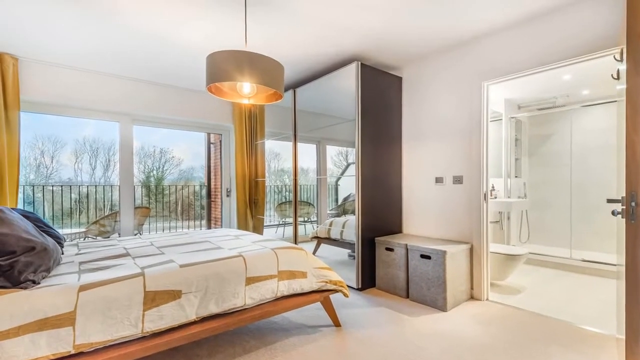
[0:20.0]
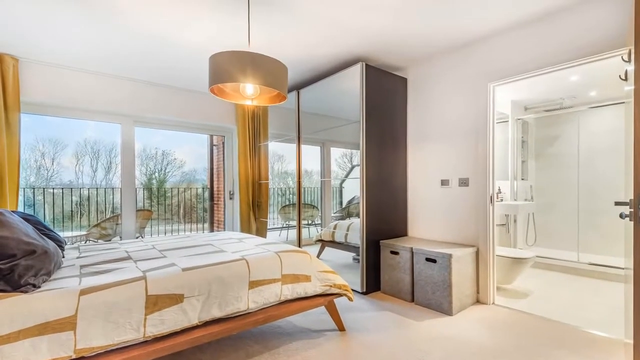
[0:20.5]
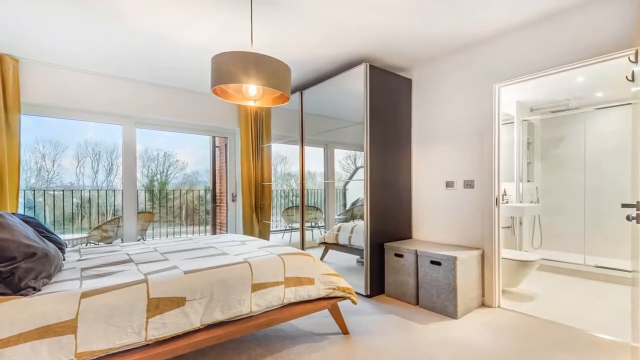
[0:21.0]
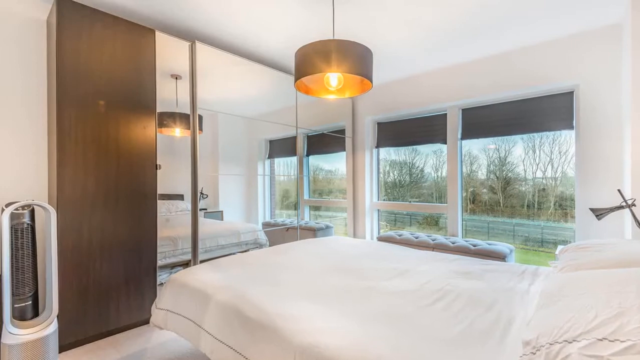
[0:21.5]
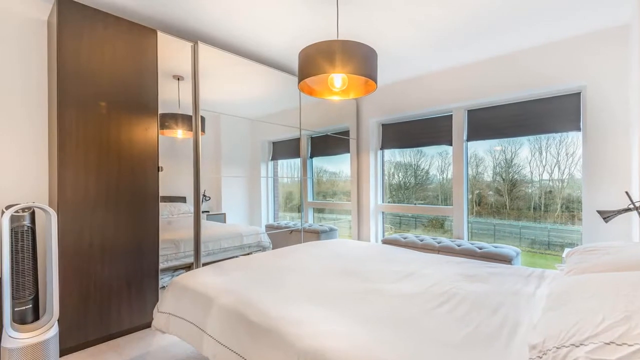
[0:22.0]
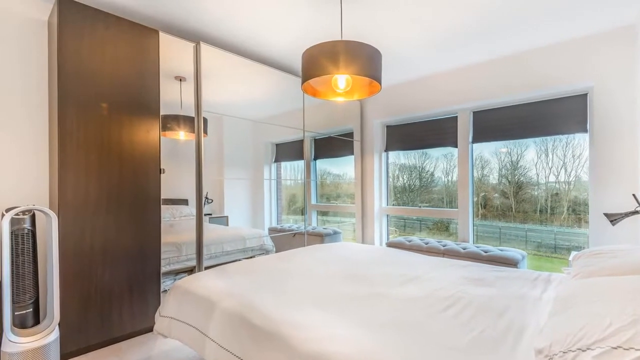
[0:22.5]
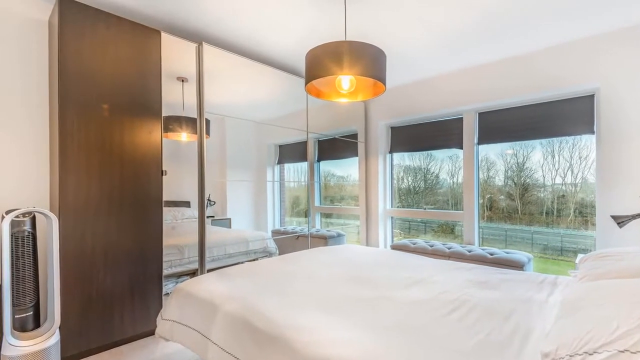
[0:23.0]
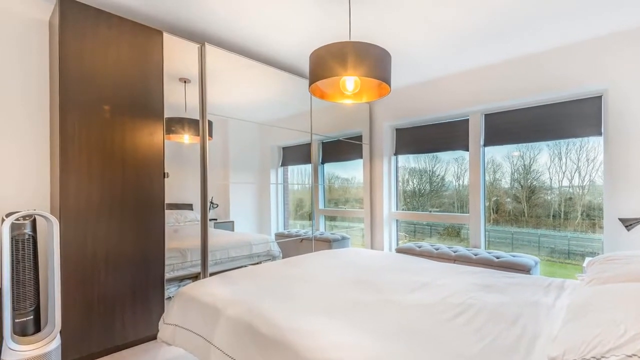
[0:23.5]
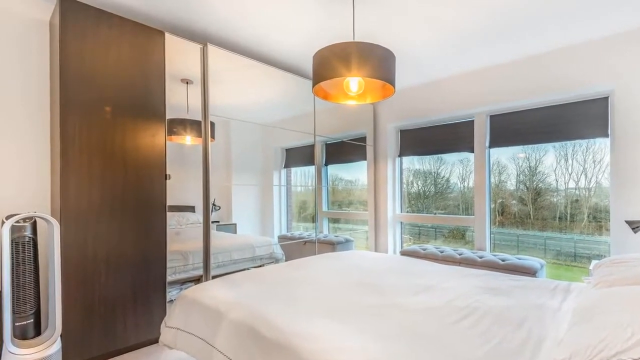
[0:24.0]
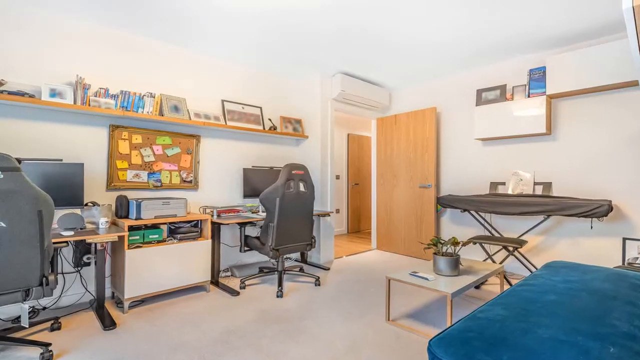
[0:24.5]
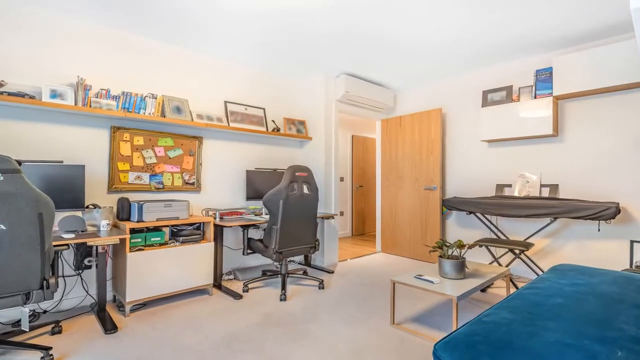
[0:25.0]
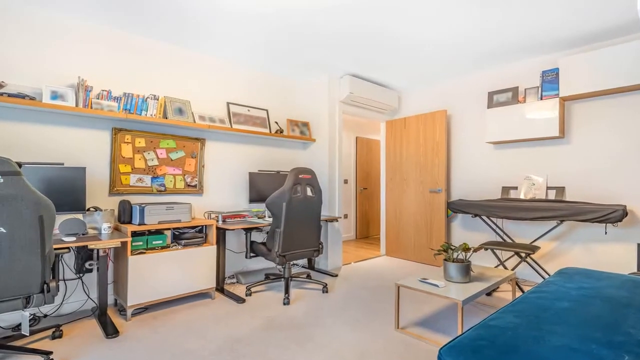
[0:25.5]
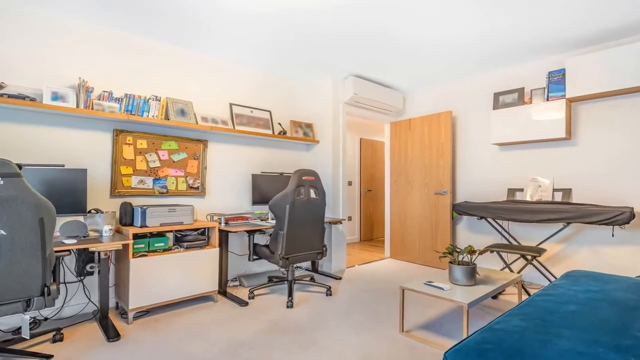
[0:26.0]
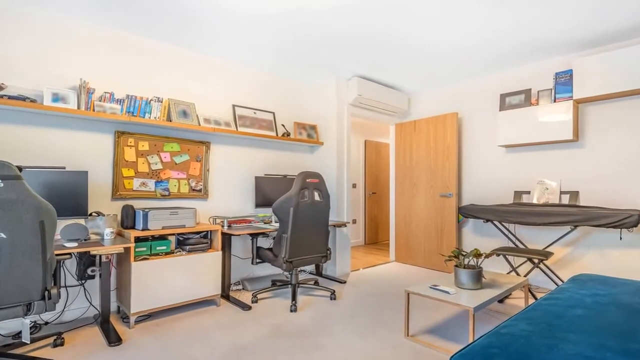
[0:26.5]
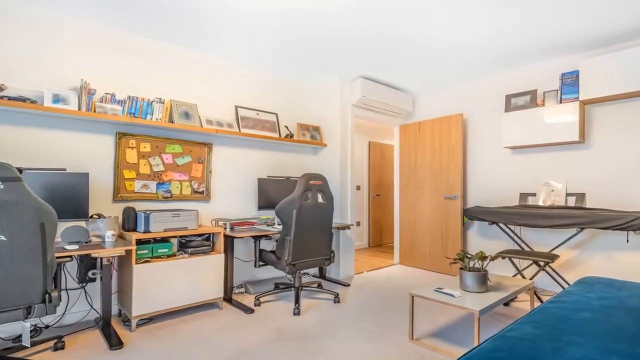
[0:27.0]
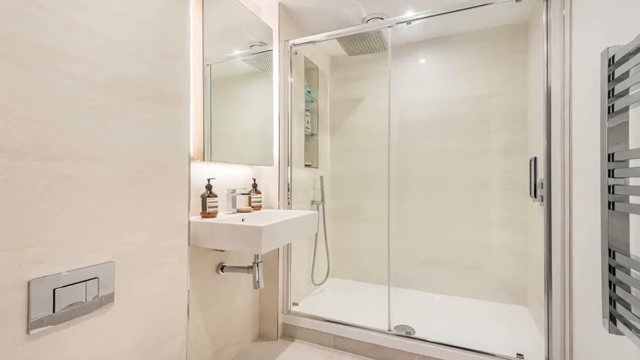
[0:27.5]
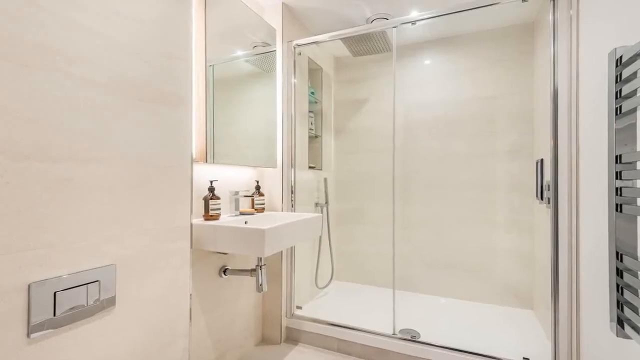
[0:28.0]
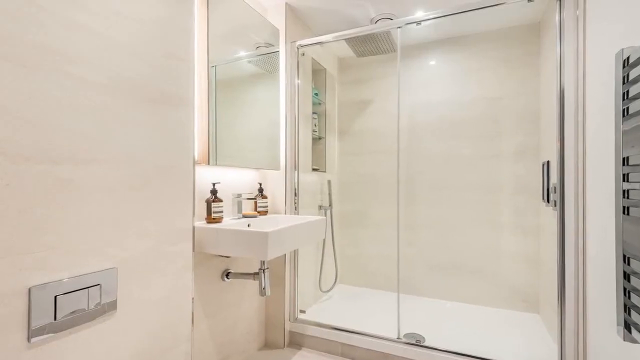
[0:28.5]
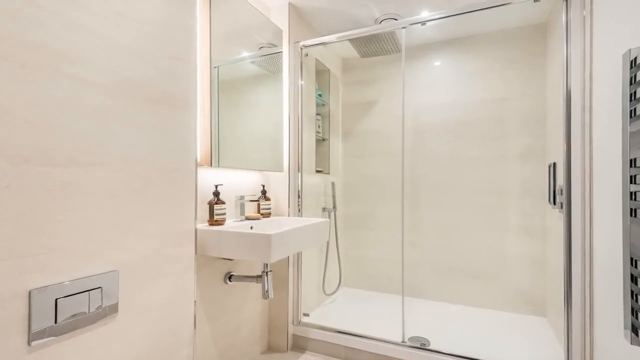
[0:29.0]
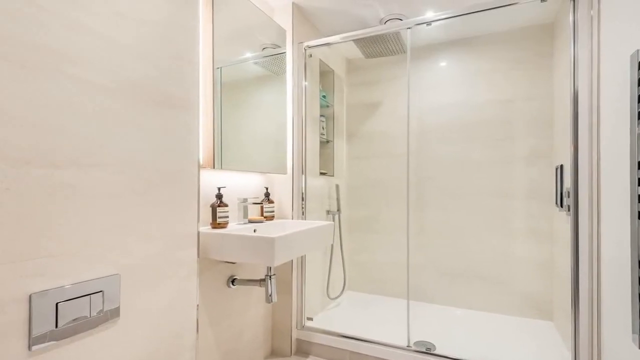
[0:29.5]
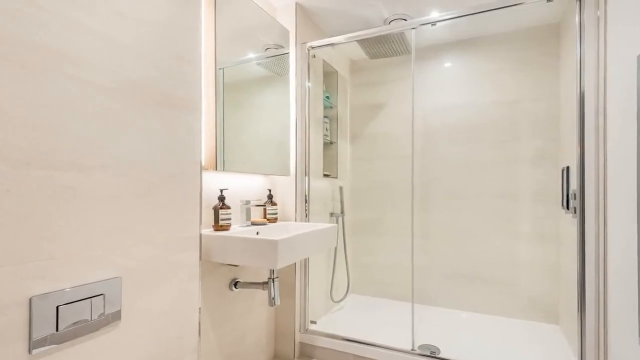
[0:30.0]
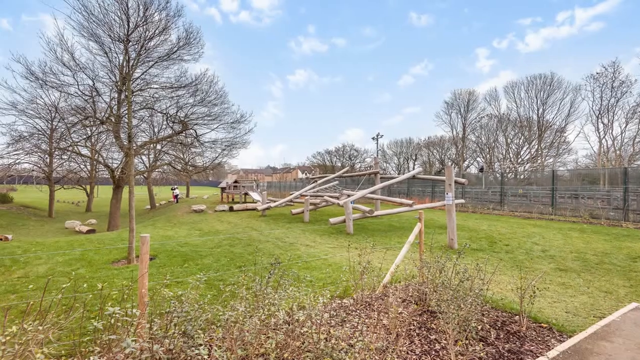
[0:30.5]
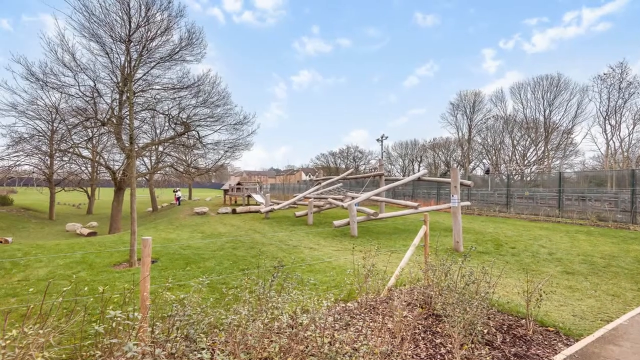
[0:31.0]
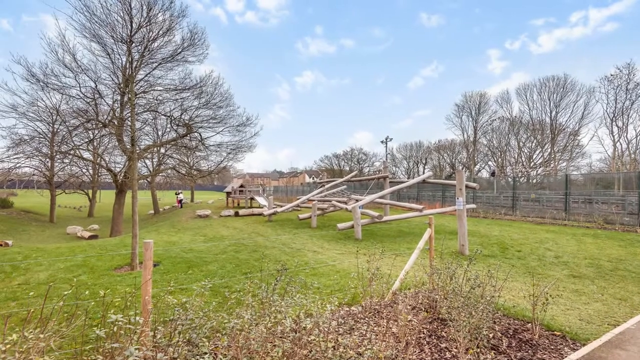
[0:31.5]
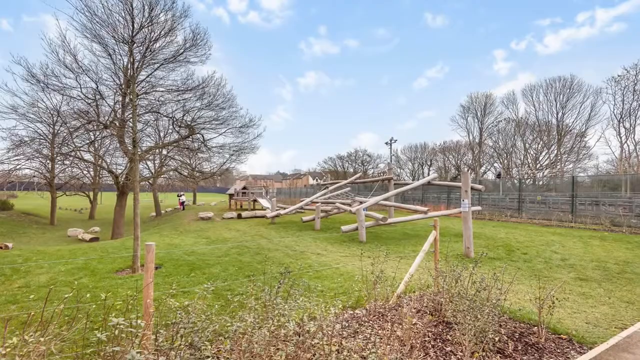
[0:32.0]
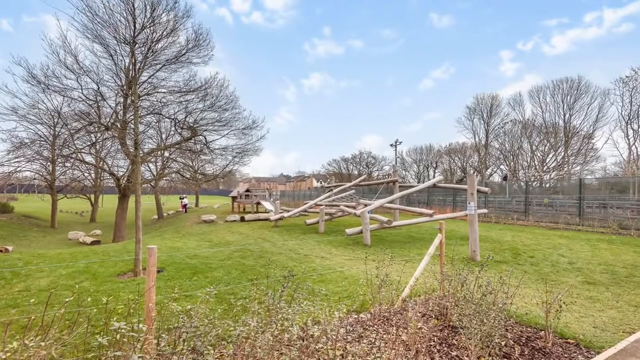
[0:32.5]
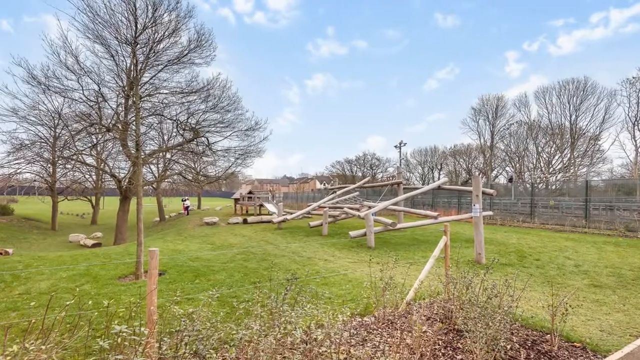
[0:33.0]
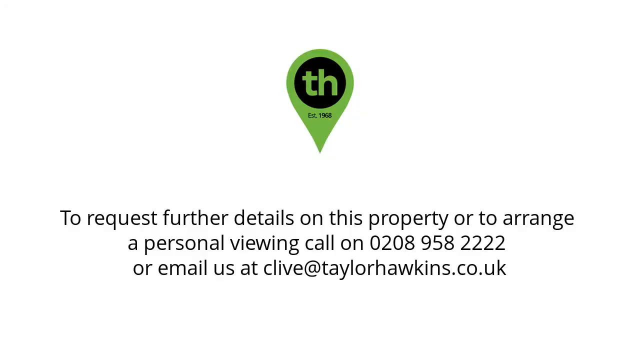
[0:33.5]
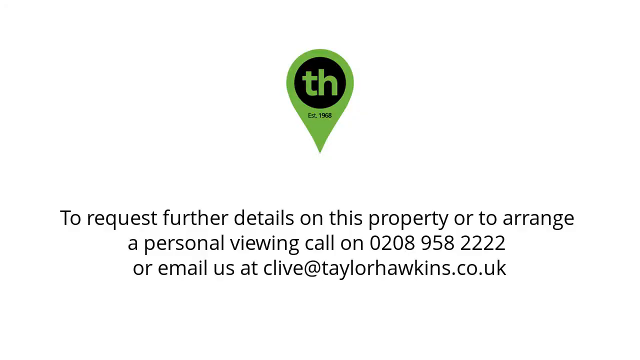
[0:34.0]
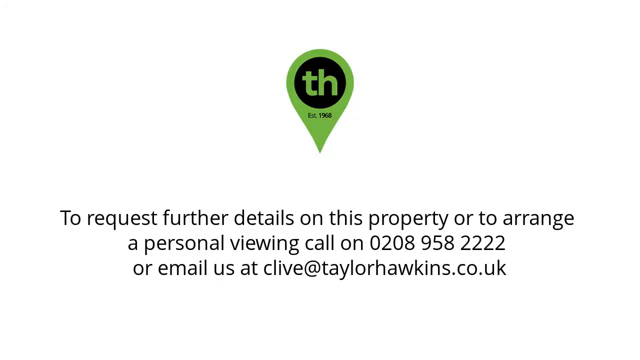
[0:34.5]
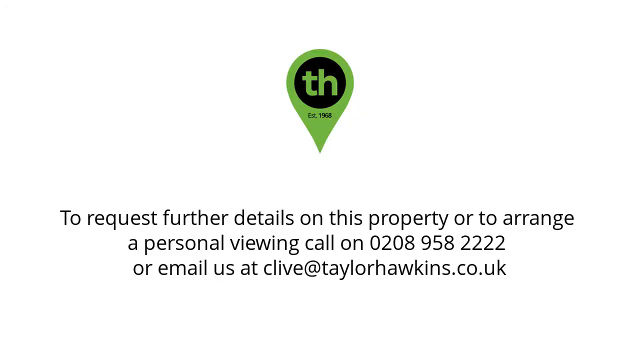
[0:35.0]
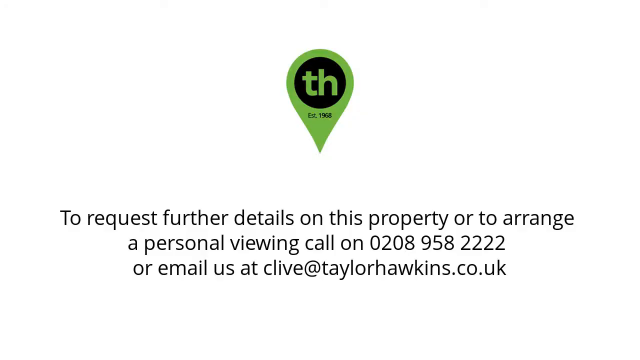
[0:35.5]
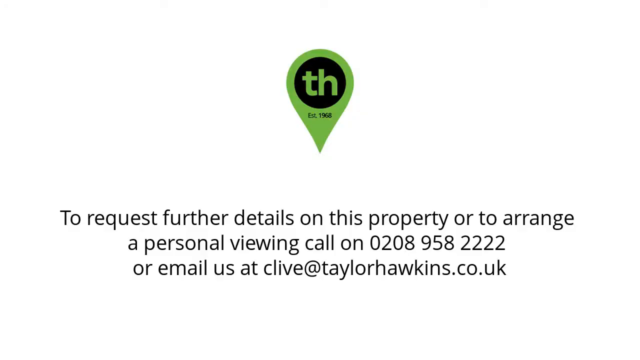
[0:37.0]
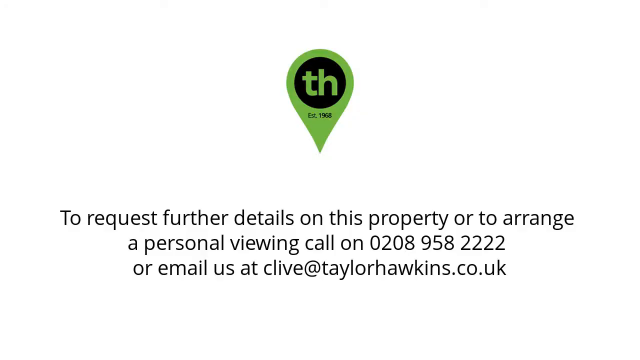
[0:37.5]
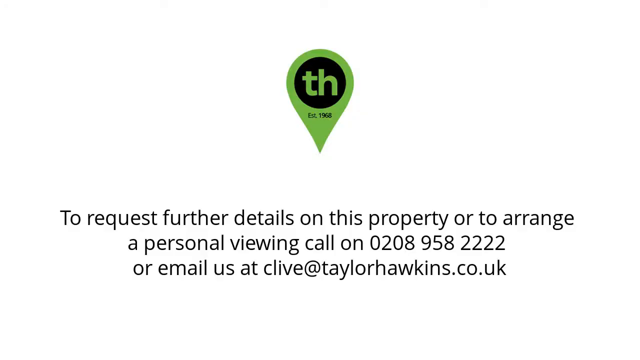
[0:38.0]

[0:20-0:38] The video begins with an upside-down green teardrop with black in the center and the two letters T and H inside, with "established 1968" underneath. It then switches to a view of a group of apartment complex buildings that look to be made of brick, with lots of windows. There are three main buildings and some more in the back. Next is a living room with a TV, a coffee table and a sofa; through the large windows the other buildings are visible. Another view shows the dining room table, which is situated behind the blue sofa from the living room, so it looks like an open floor plan. There is a bookcase on the wall. The video then switches to a very white kitchen with white countertops, white appliances and a white floor. There are also views of a bathroom, what looks to be possibly a work area, and possibly an outdoor playground area. At the end, the logo appears again with information about seeing further details on the property, along with a phone number and an email that goes to the UK.